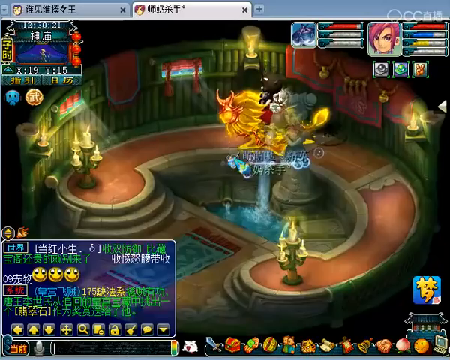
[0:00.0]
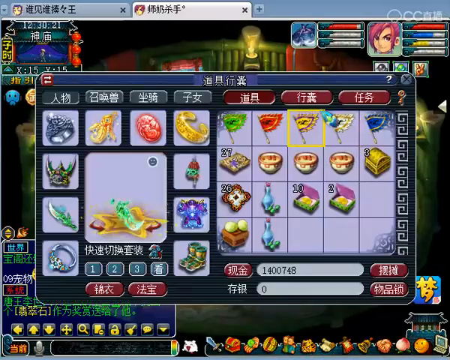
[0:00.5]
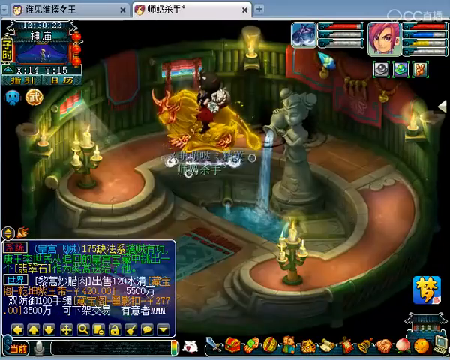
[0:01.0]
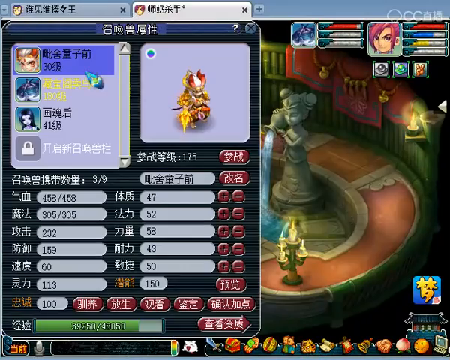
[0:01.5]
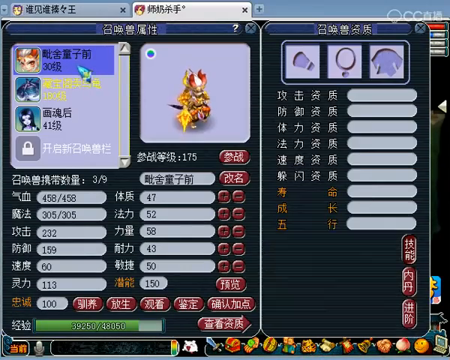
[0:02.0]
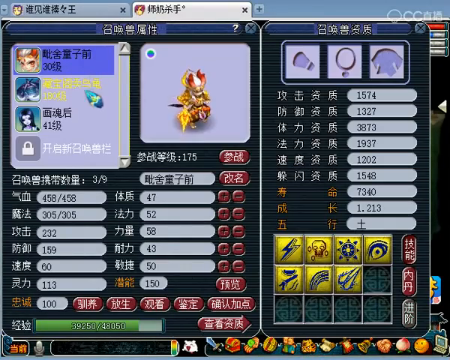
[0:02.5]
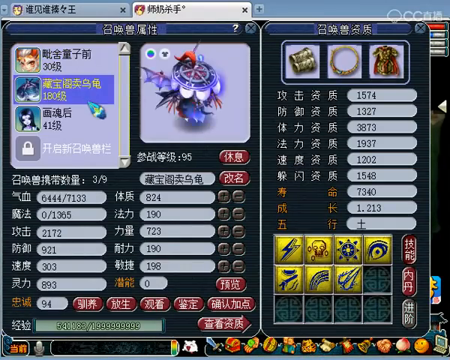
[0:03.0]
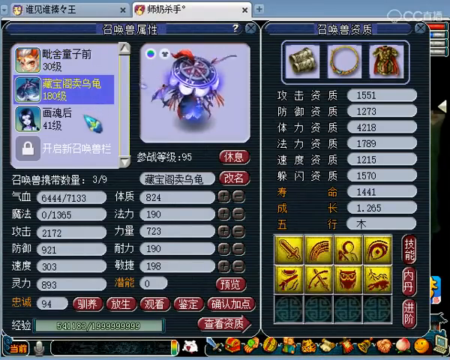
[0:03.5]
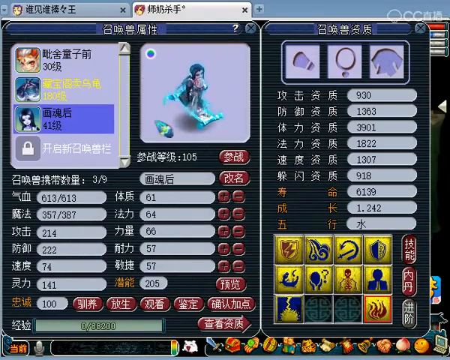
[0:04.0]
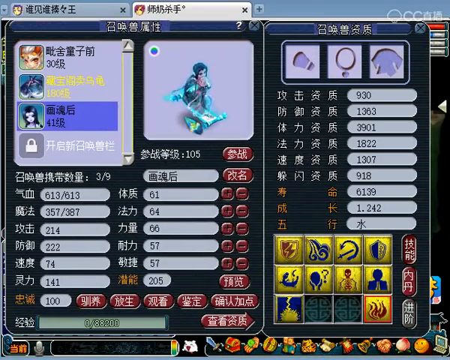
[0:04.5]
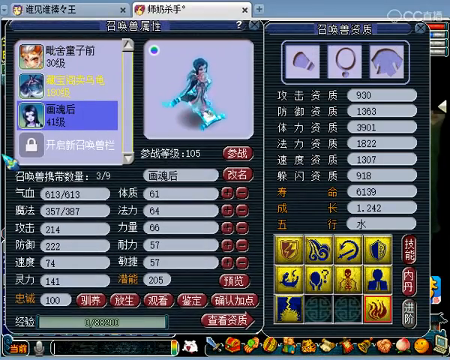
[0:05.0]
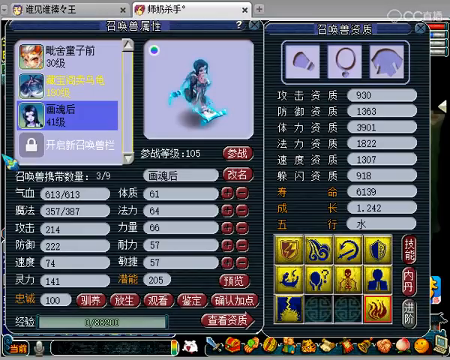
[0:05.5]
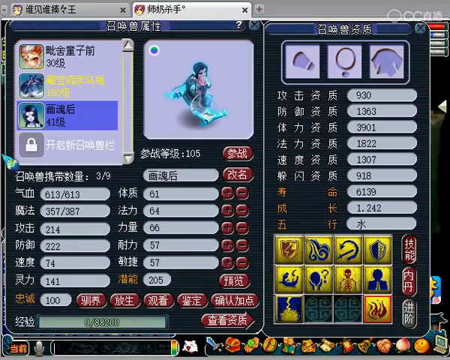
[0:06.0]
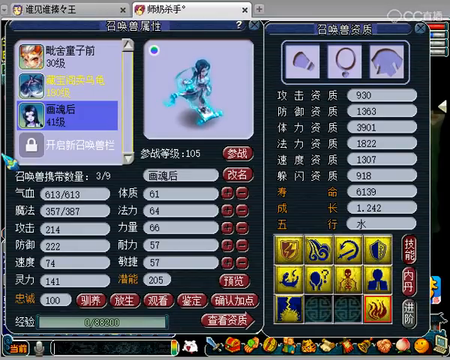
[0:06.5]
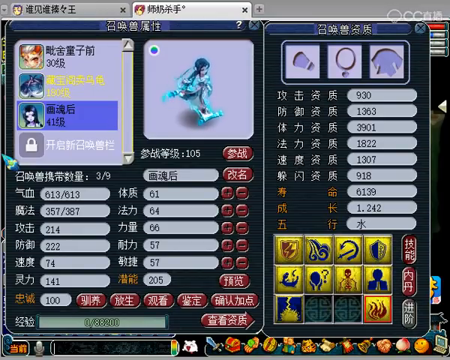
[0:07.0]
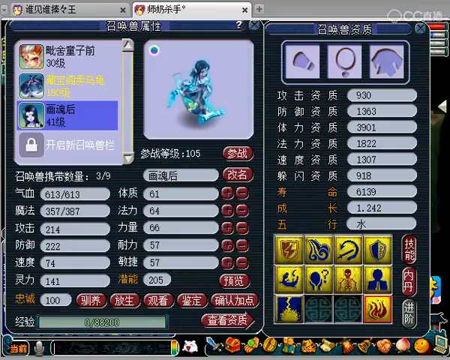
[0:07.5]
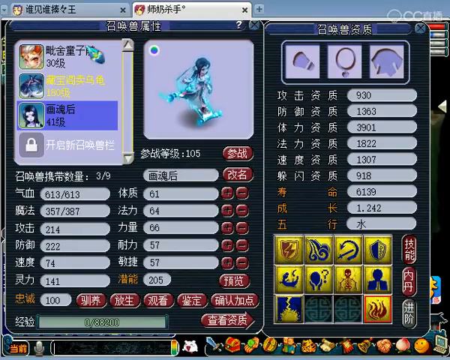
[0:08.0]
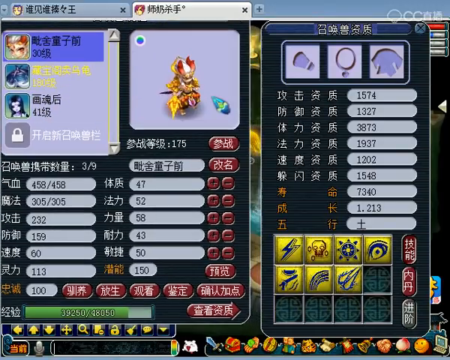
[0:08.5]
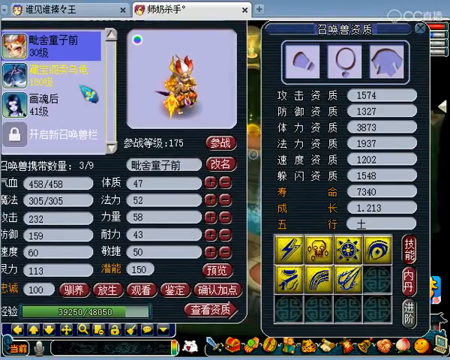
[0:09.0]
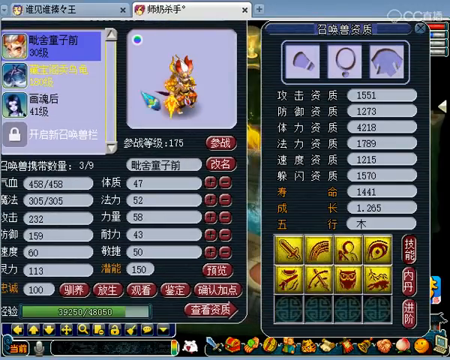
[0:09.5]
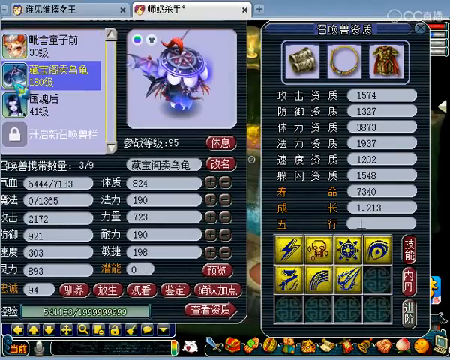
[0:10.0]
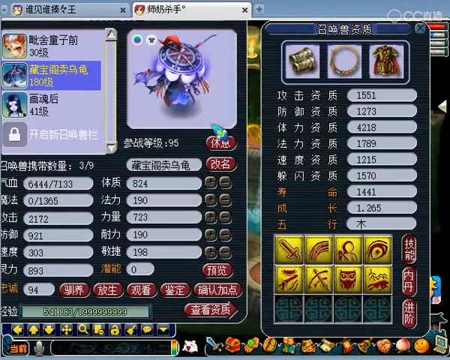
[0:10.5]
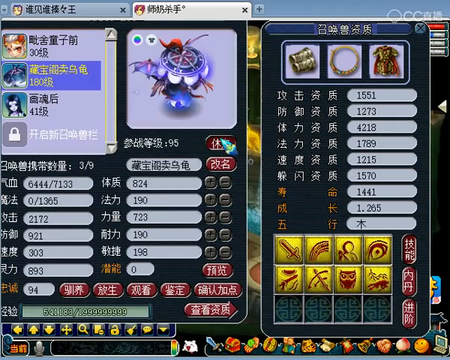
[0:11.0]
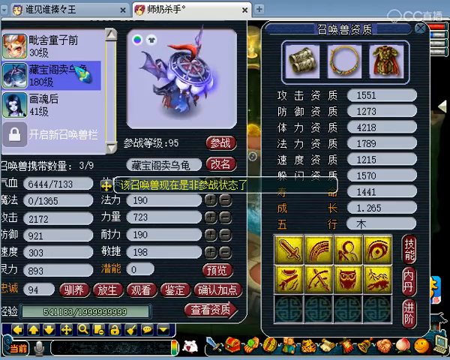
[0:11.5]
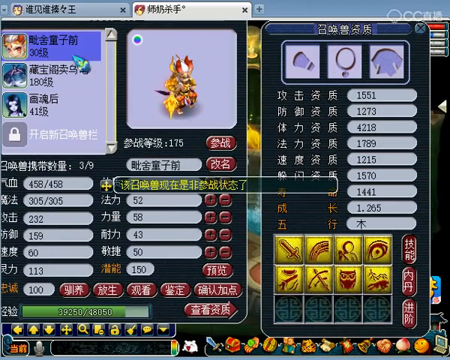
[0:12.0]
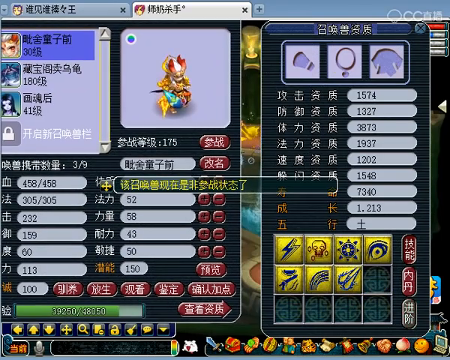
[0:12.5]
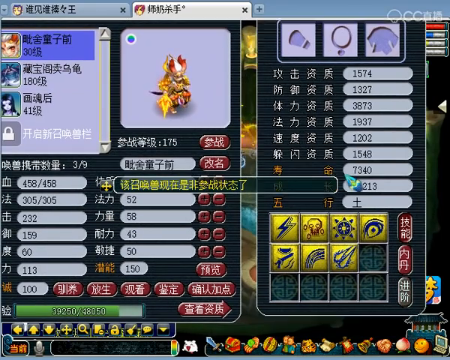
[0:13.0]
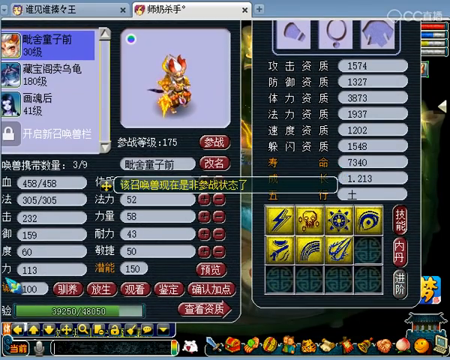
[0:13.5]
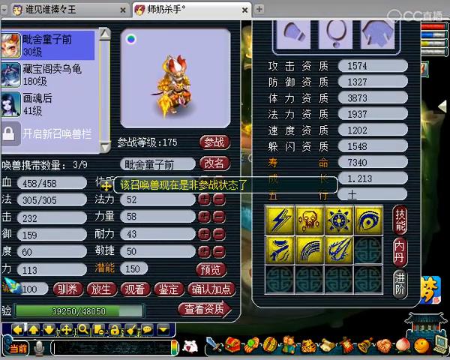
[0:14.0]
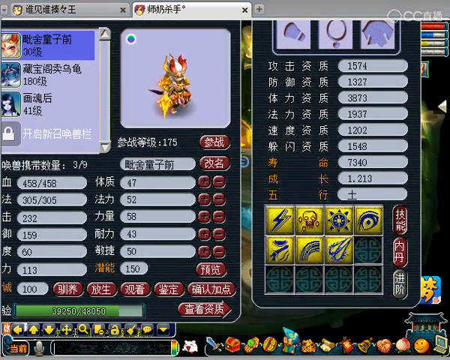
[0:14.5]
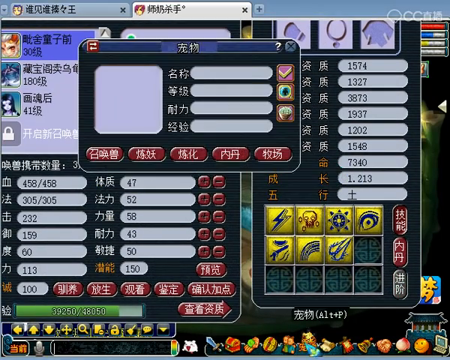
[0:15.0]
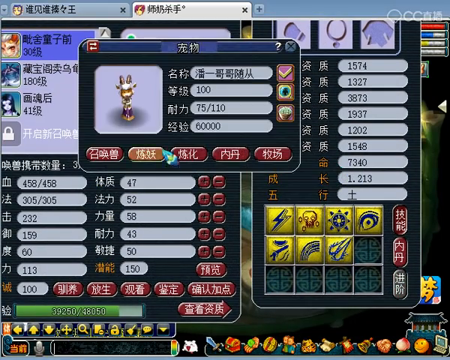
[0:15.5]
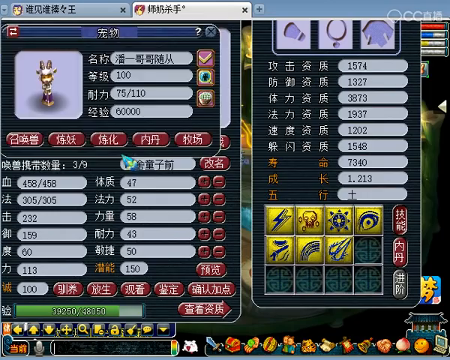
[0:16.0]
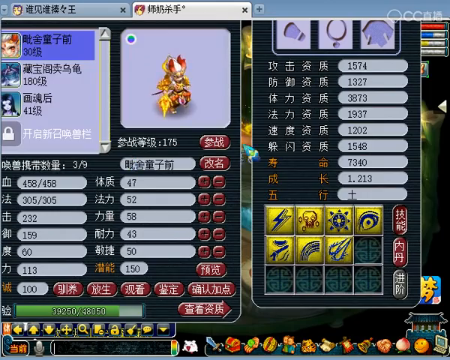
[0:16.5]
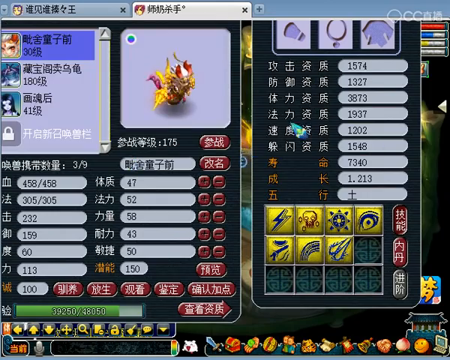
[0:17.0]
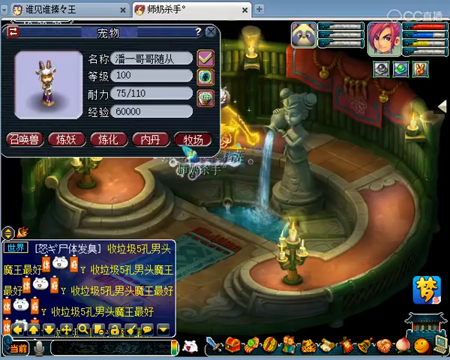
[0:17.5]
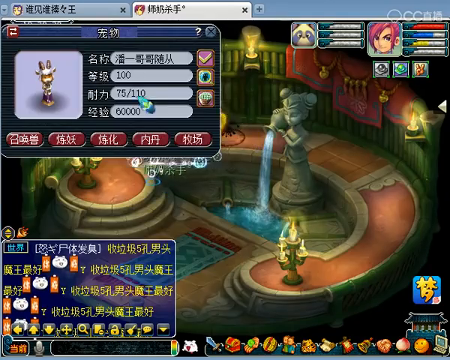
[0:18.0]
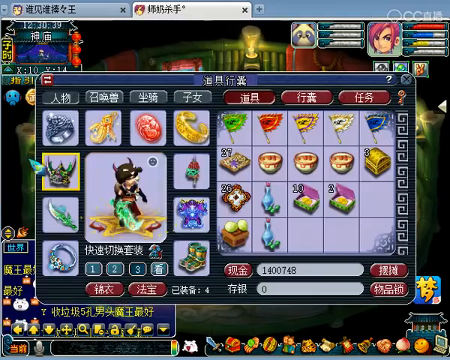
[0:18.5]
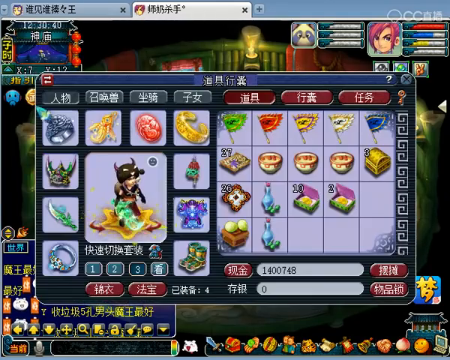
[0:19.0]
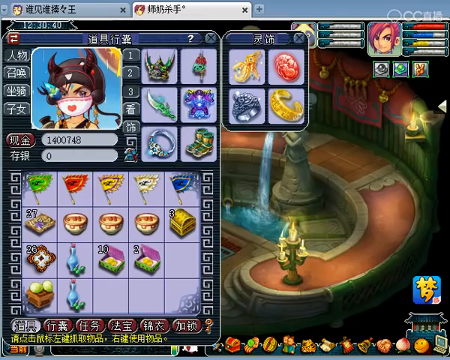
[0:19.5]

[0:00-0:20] Gameplay of what looks like a computer game is shown, and all of the on-screen text is in Chinese. The player is in a stats screen, adjusting the stats of the characters they use. At first a character that looks somewhat like a goblin, wearing an orange or reddish helmet, is shown. The view scrolls a little past a purplish ghost jellyfish character, then stays mostly on the same red-helmeted, goblin-looking character, whose fur looks golden. The player then closes the window and returns to the main gameplay. There appears to be a golden lion figure in the back right, and two health bars are at the top right: one for the jellyfish character and another apparently for the player character, who has pink hair.